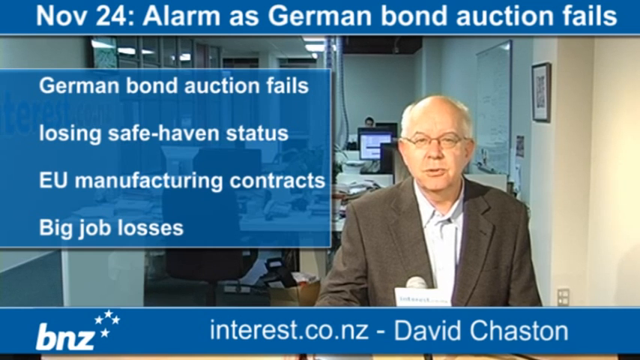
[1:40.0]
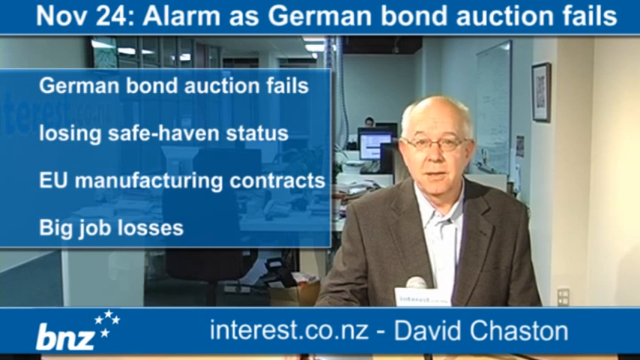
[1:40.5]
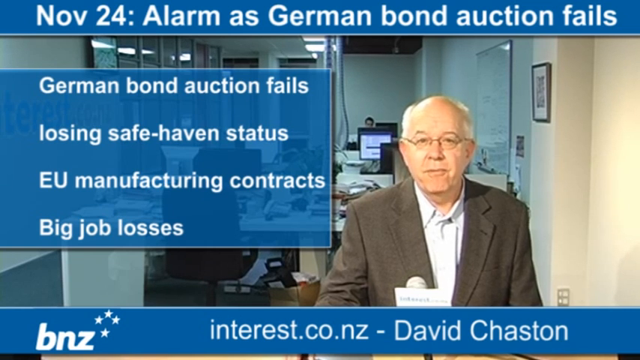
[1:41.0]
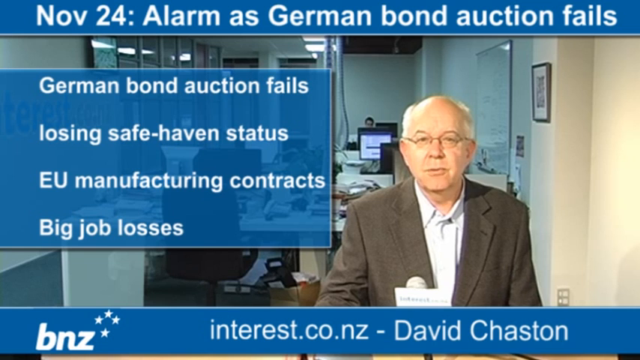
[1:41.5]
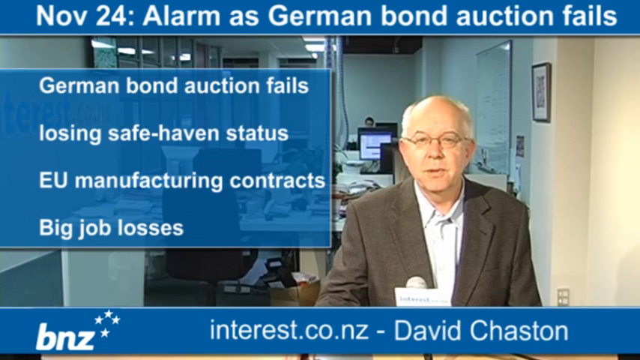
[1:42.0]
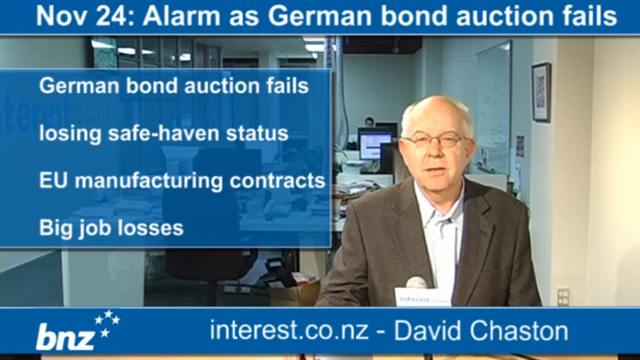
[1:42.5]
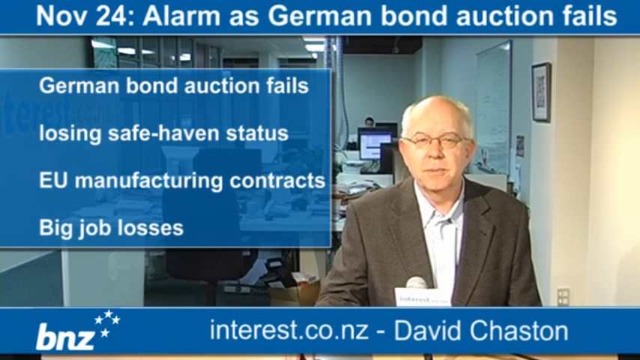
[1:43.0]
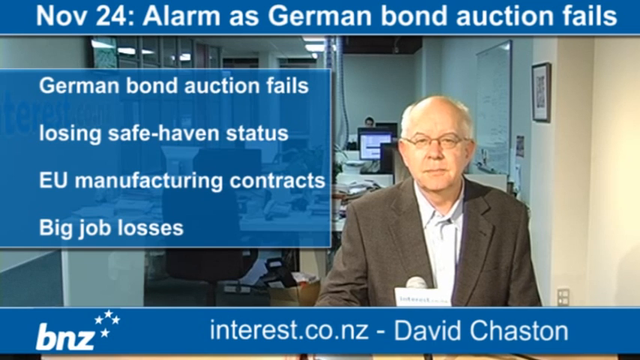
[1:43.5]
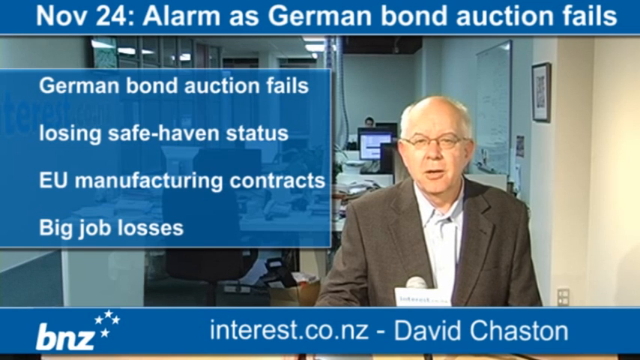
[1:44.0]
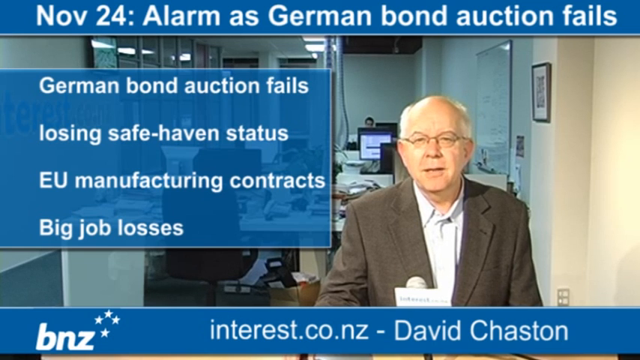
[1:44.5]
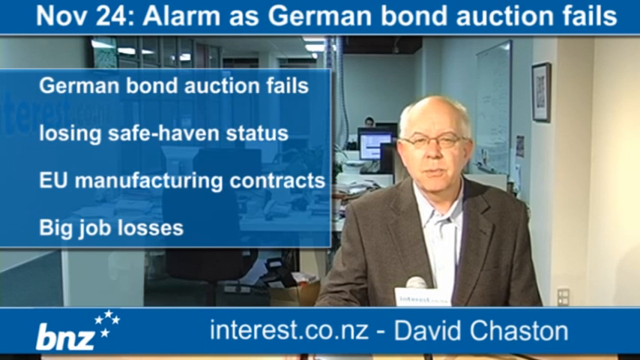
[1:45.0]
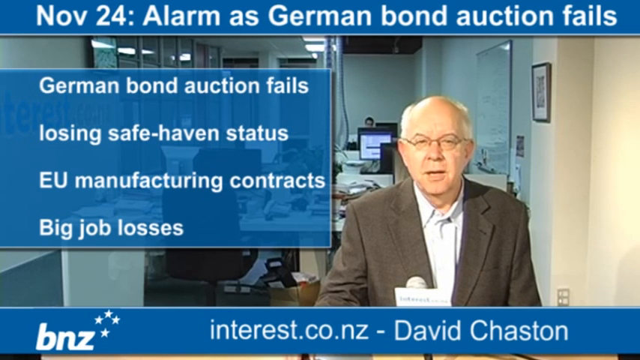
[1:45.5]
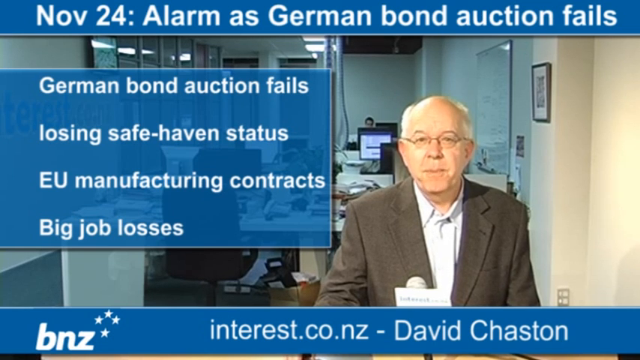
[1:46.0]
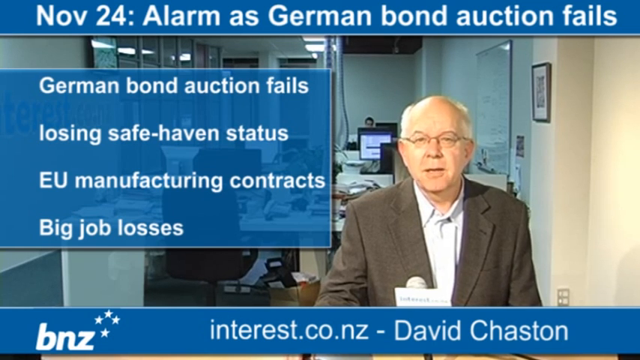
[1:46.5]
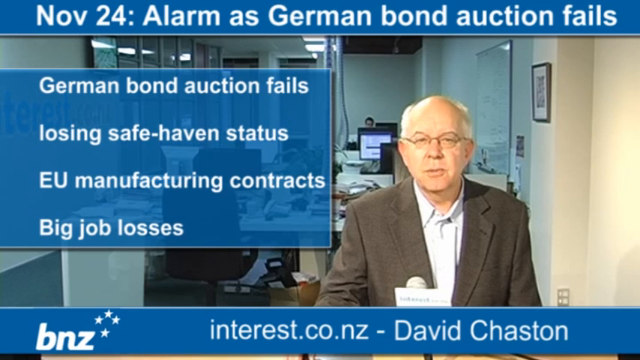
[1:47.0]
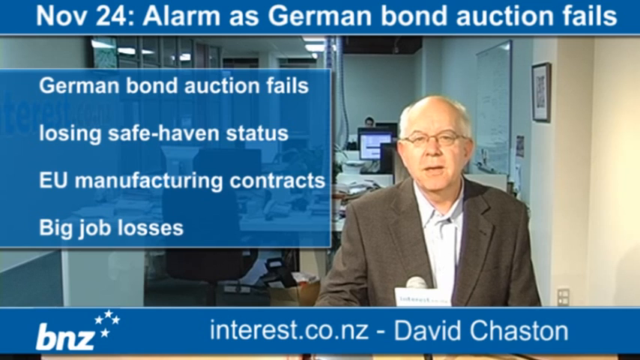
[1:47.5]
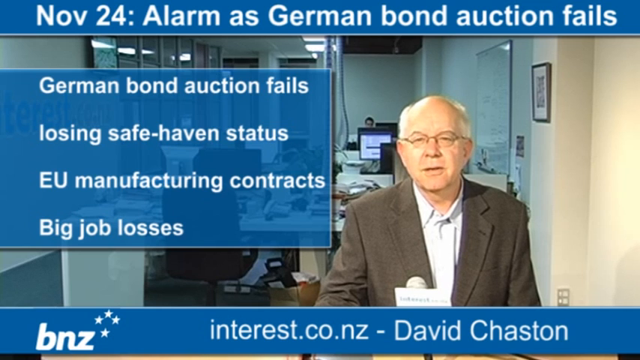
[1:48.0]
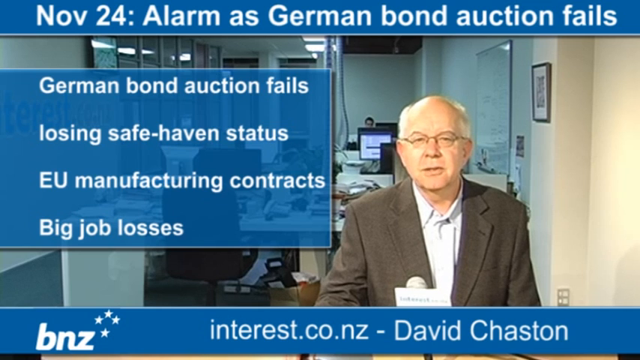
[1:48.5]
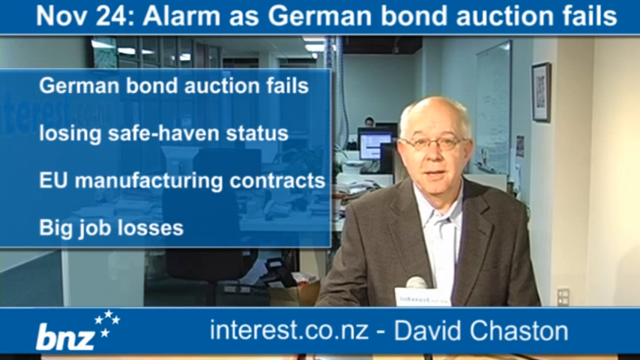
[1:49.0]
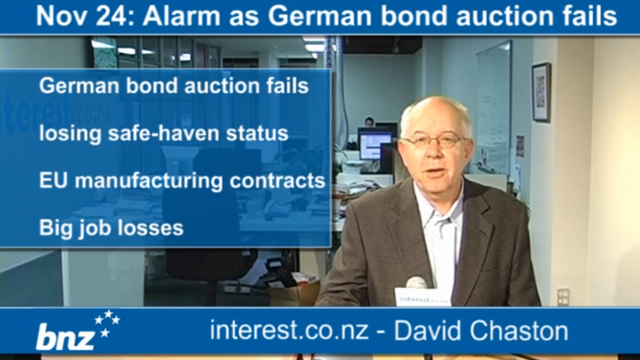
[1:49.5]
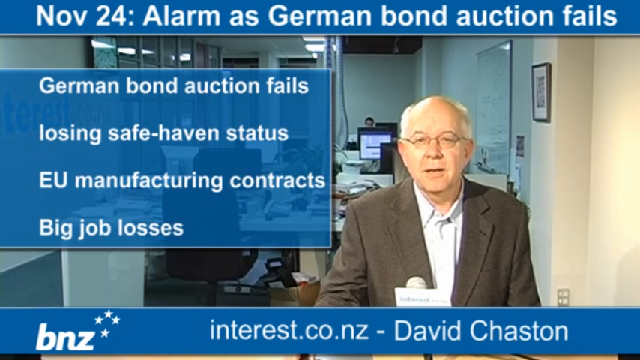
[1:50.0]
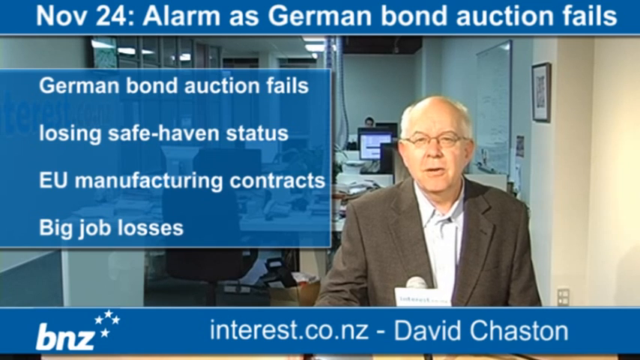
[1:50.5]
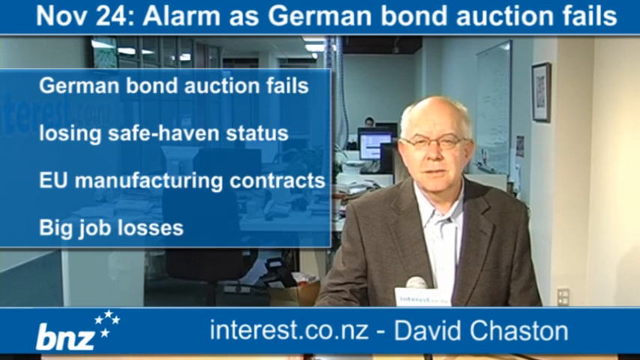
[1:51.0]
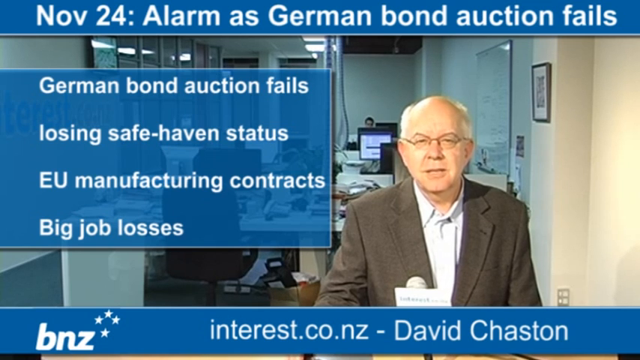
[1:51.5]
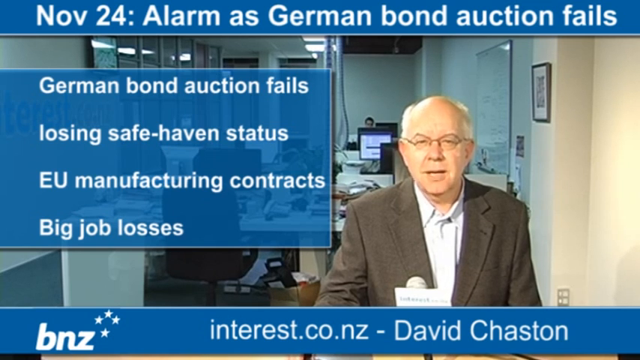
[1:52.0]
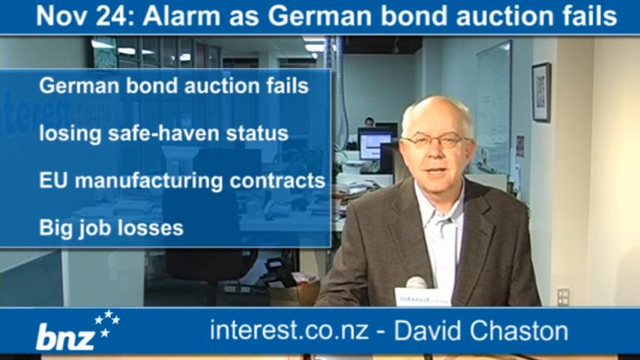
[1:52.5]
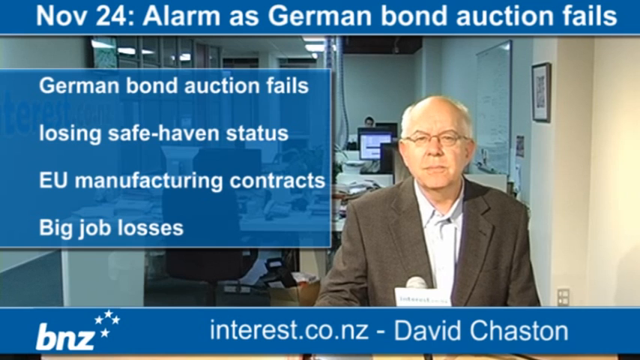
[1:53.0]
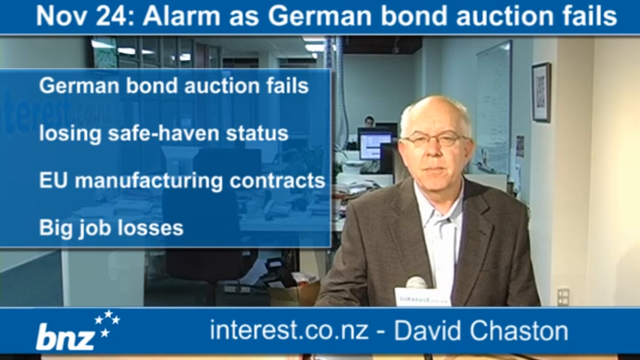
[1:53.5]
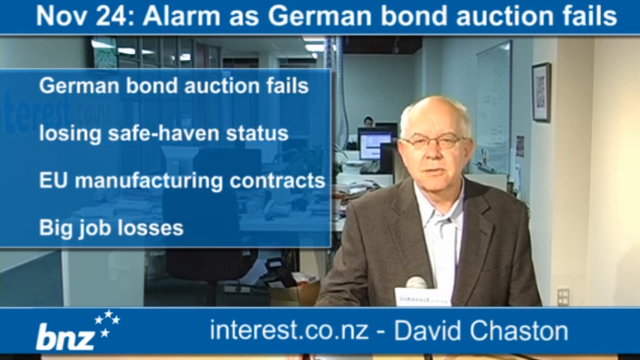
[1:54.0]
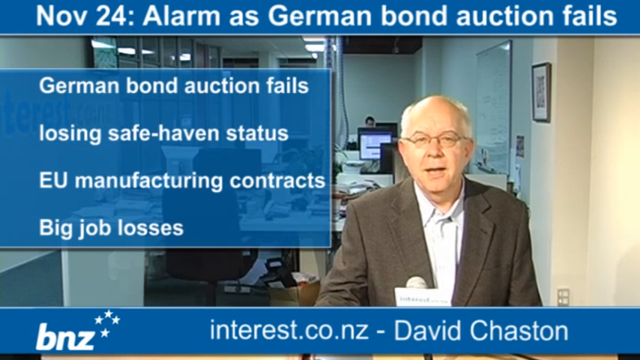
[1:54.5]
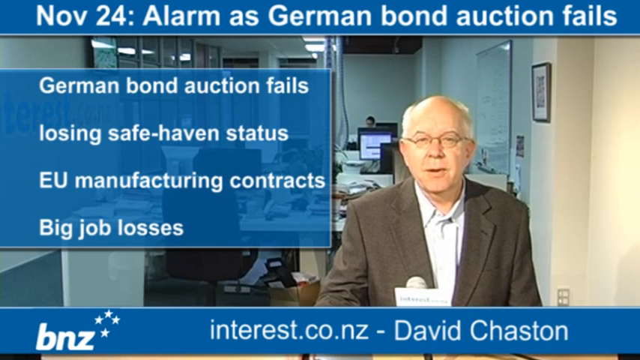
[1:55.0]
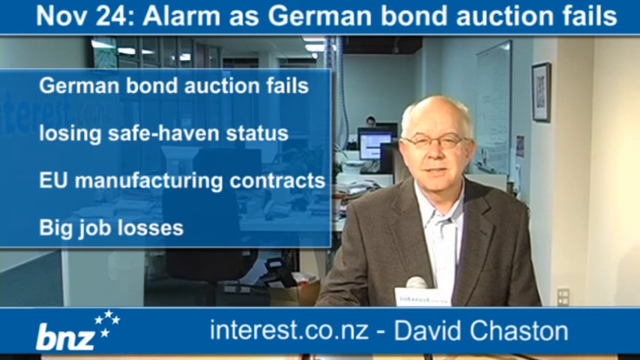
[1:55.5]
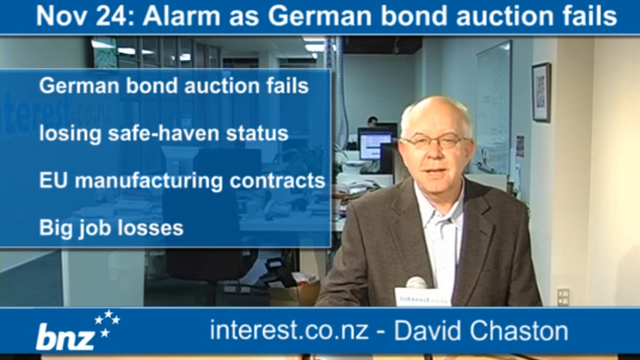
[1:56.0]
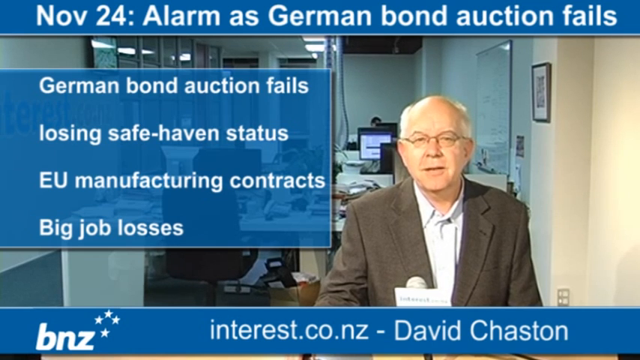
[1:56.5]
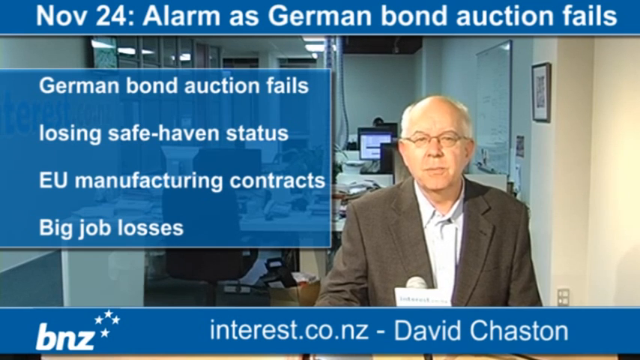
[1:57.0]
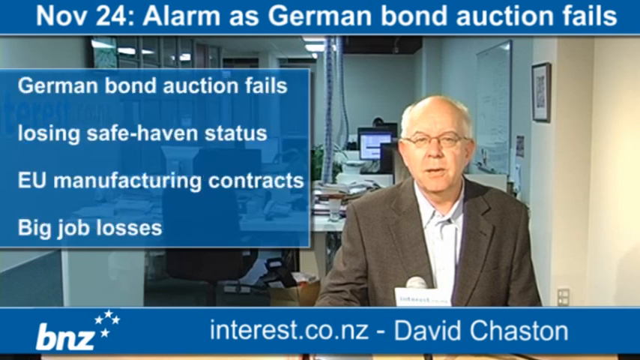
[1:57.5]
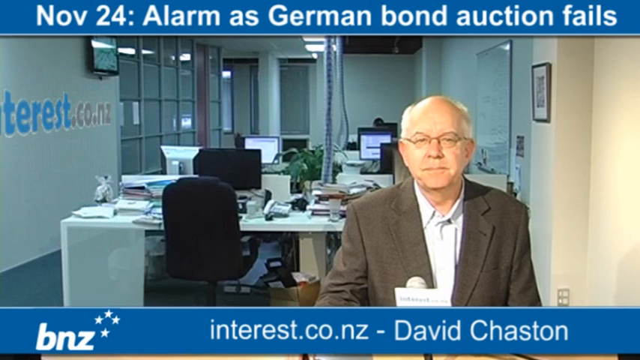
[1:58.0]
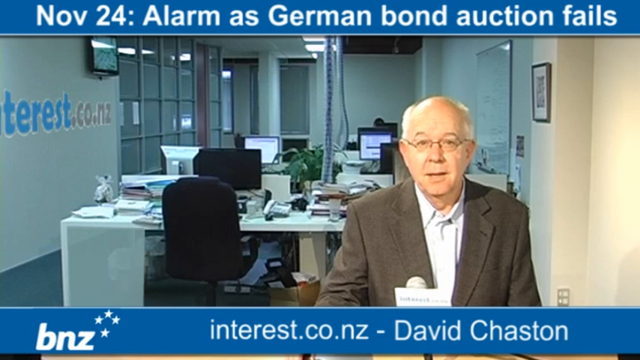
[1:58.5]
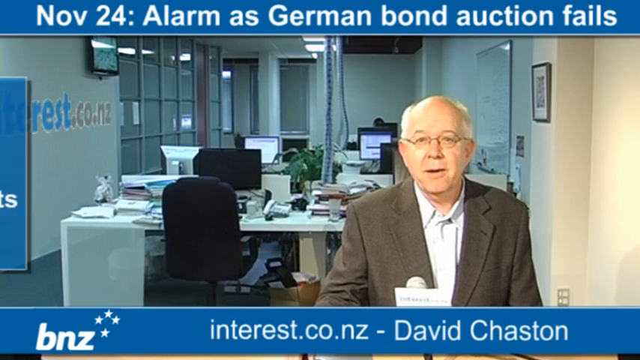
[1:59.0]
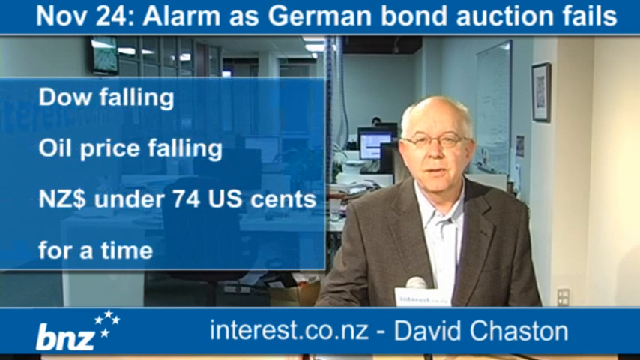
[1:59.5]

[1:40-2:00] The older white man is still talking in the same footage. The text apparently says something about the Dow falling, and then reads "oil price falling, New Zealand under 74 US cents for a time." Nothing else is shown; the same scene continues.